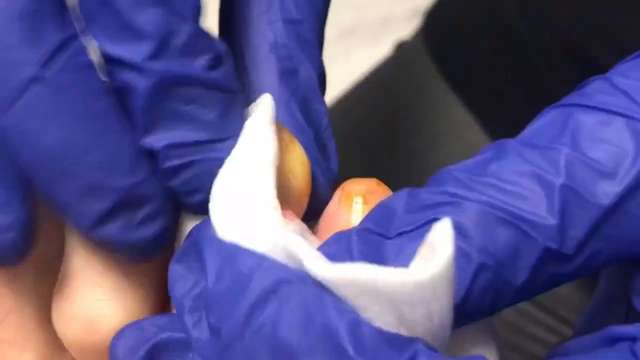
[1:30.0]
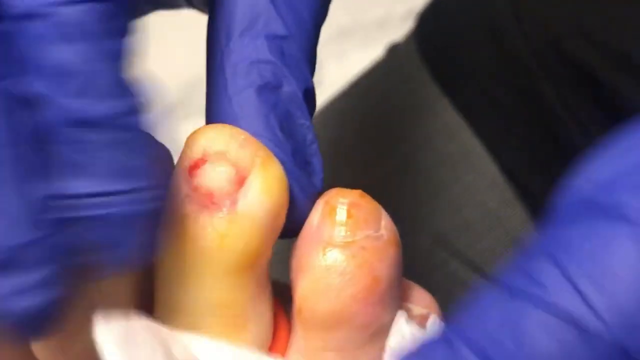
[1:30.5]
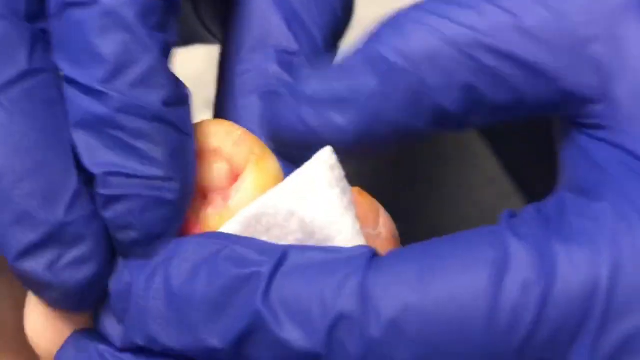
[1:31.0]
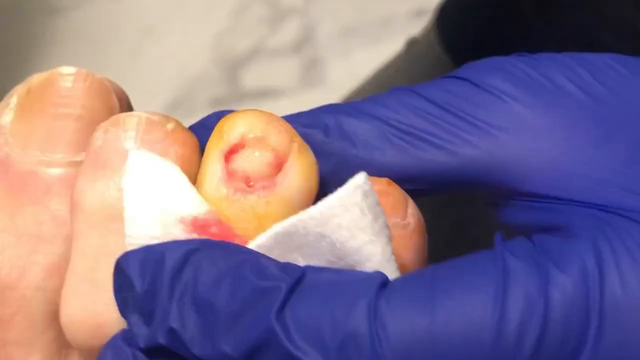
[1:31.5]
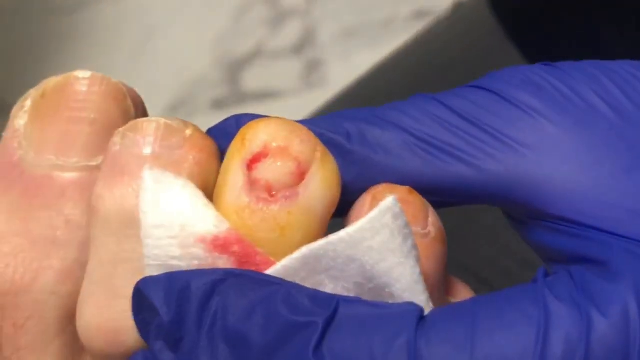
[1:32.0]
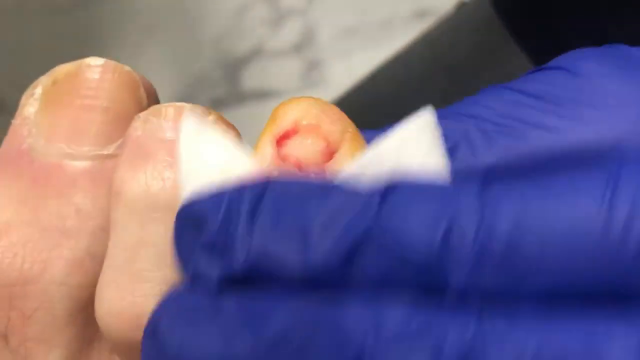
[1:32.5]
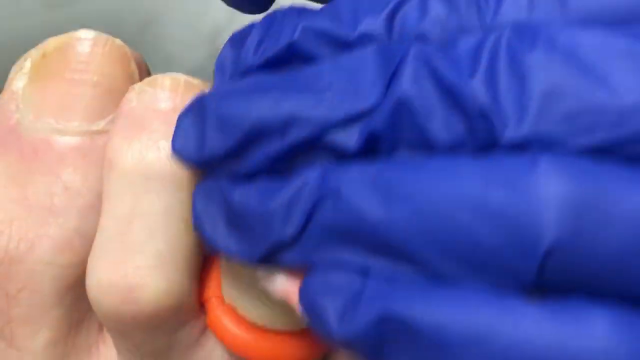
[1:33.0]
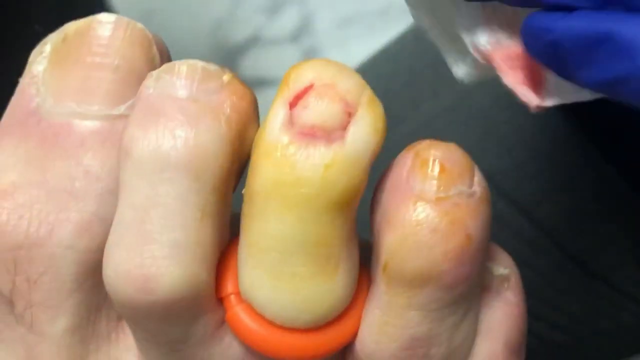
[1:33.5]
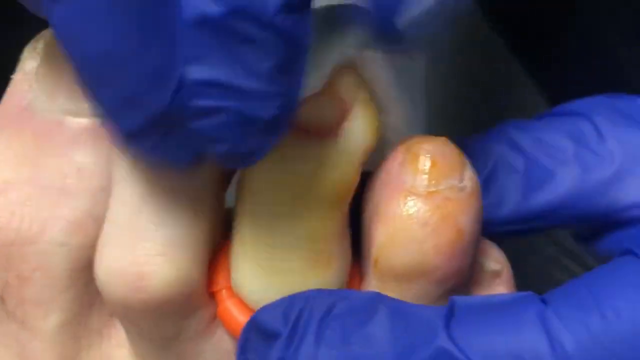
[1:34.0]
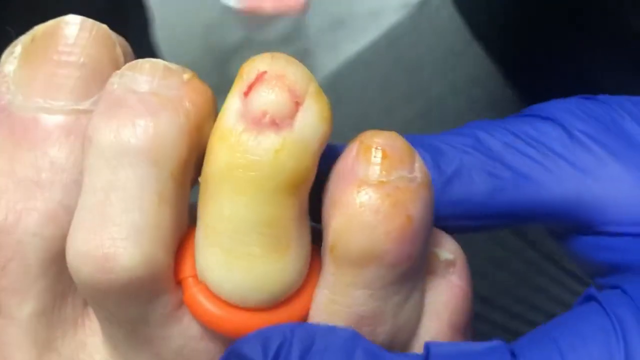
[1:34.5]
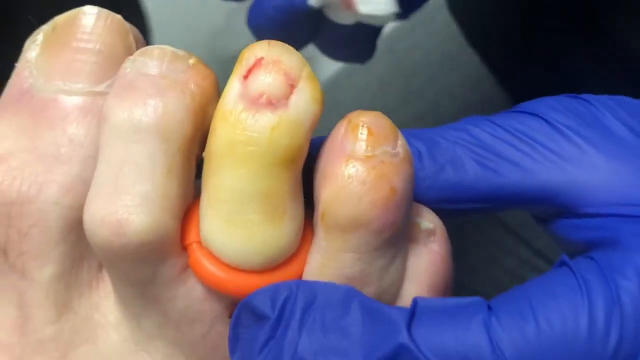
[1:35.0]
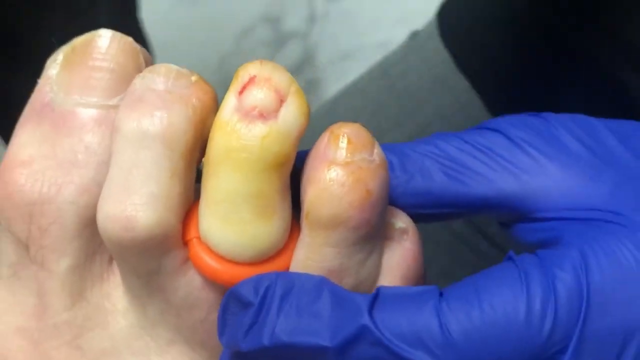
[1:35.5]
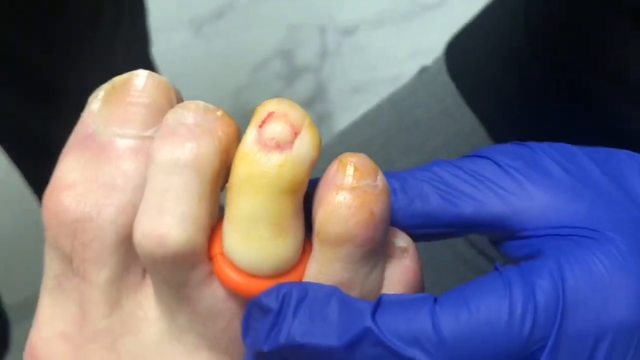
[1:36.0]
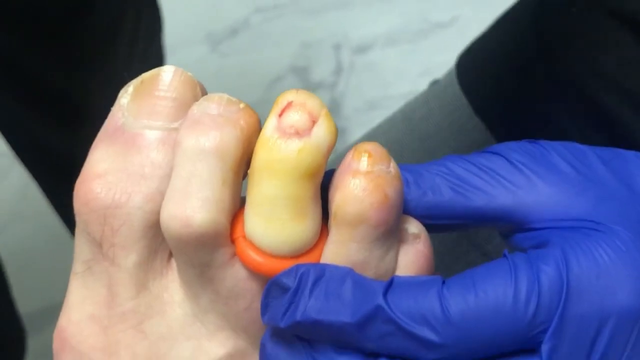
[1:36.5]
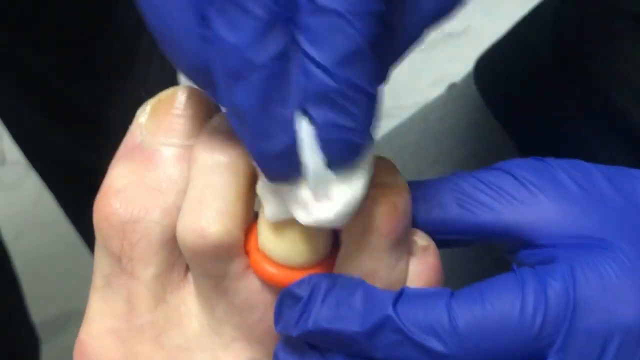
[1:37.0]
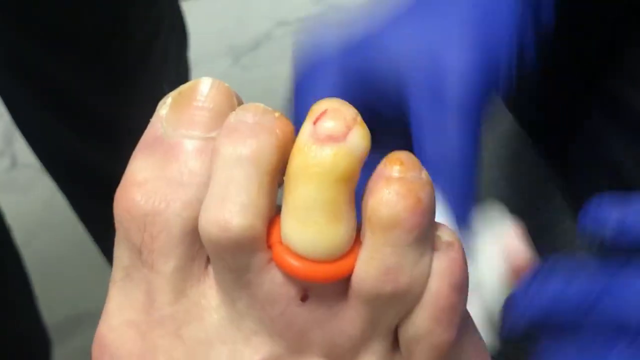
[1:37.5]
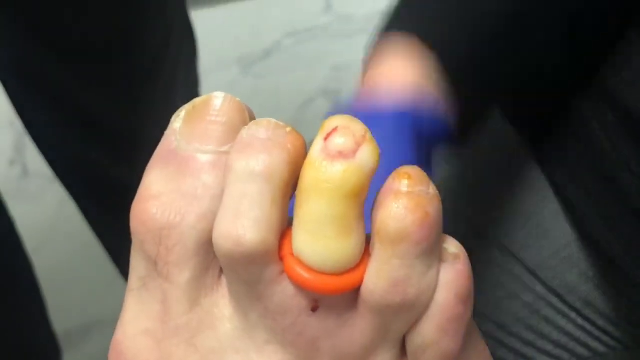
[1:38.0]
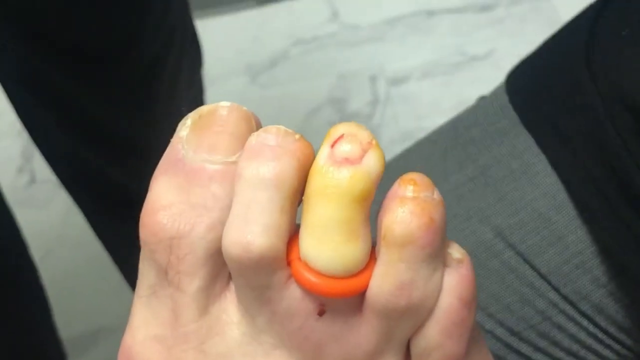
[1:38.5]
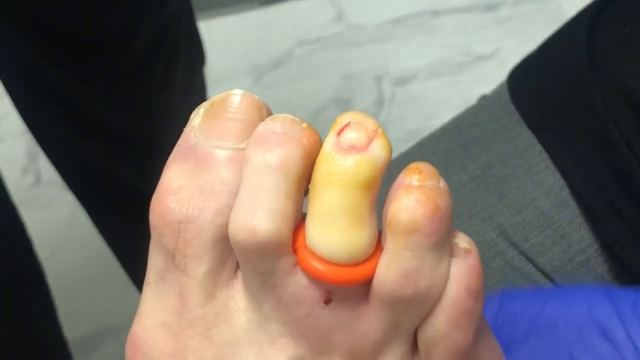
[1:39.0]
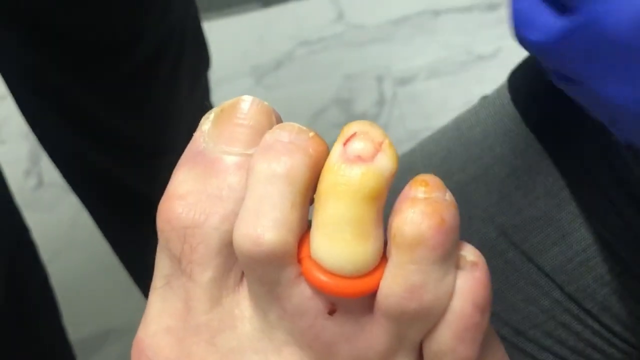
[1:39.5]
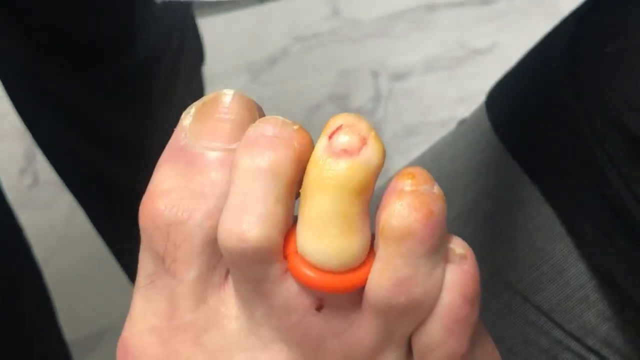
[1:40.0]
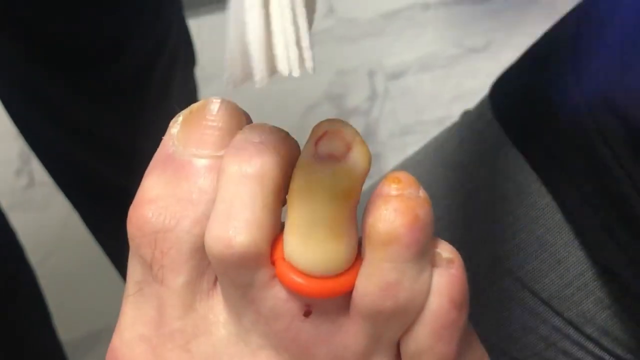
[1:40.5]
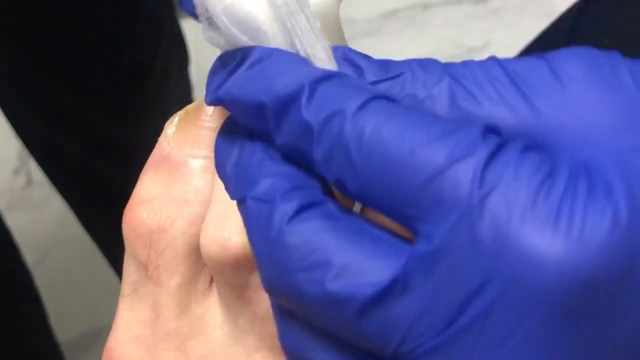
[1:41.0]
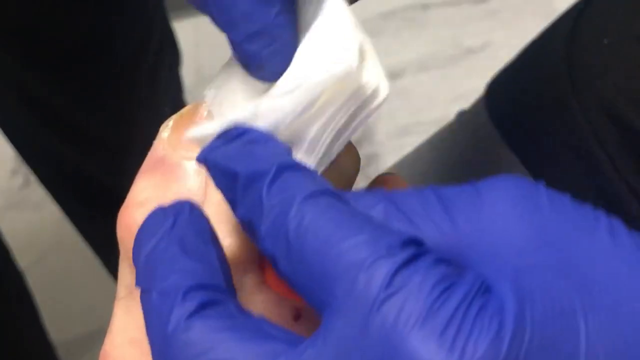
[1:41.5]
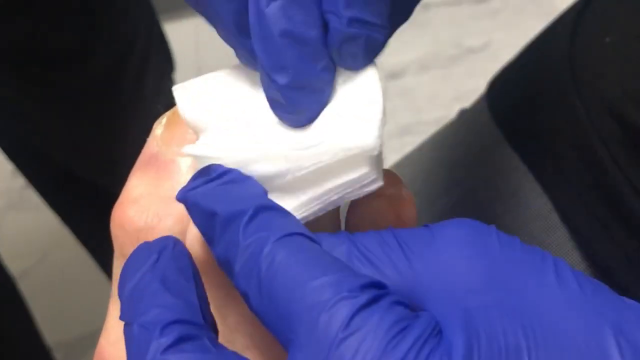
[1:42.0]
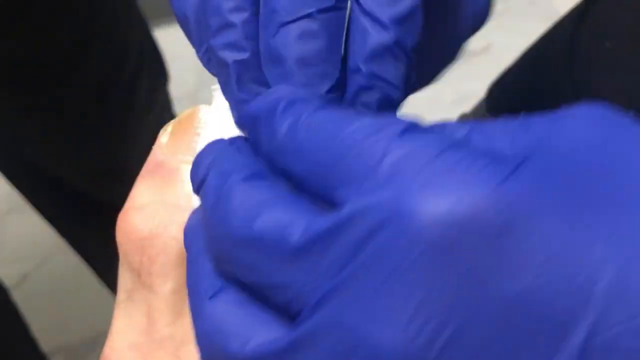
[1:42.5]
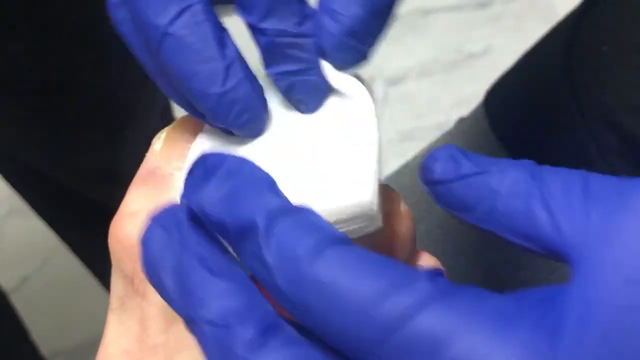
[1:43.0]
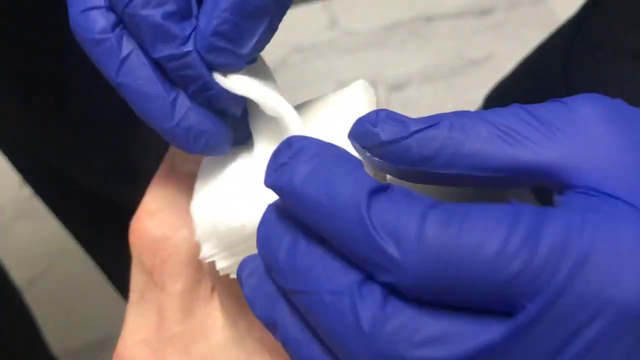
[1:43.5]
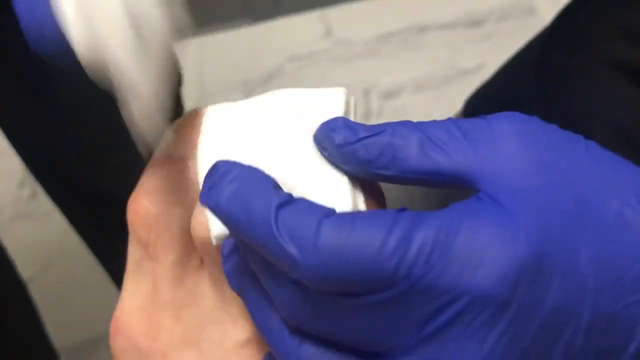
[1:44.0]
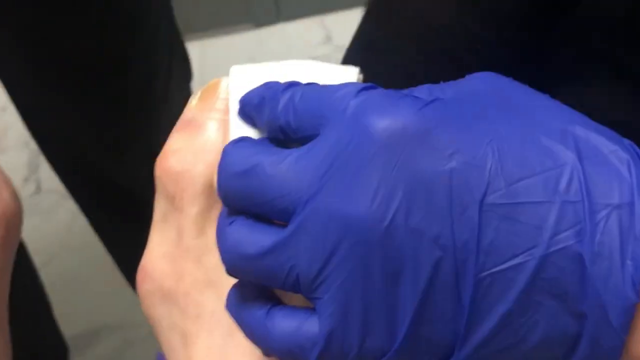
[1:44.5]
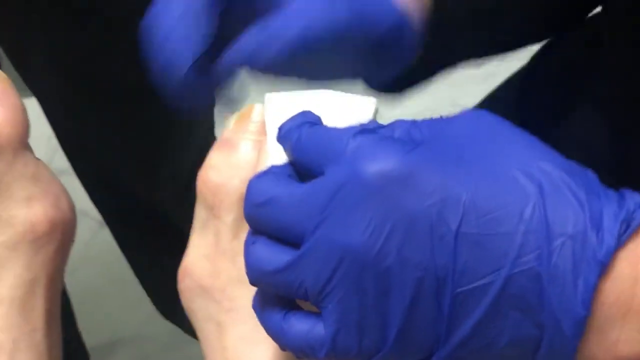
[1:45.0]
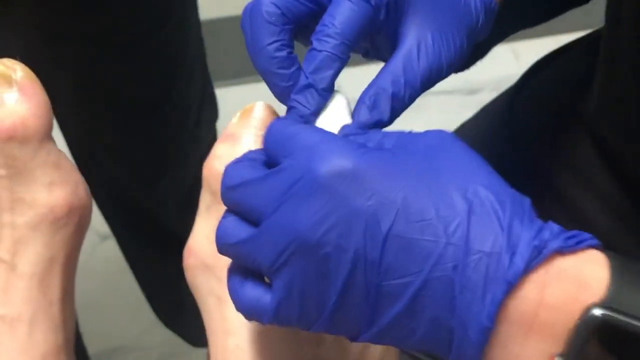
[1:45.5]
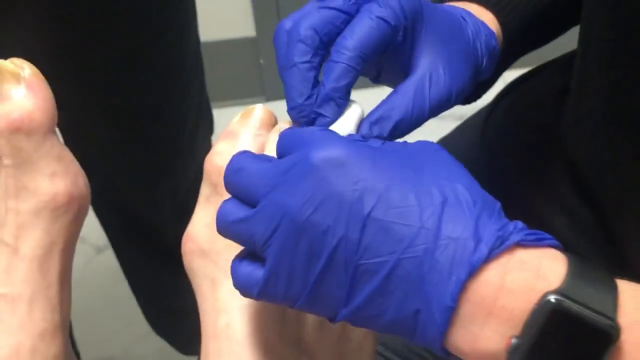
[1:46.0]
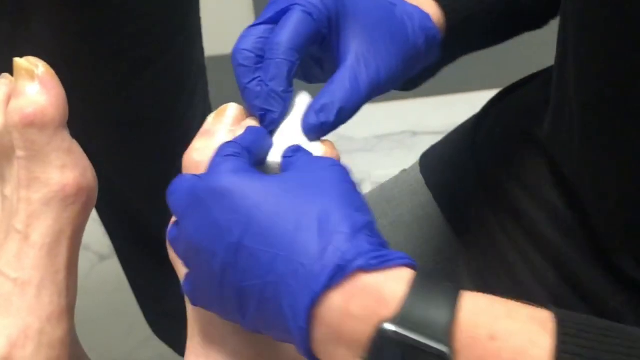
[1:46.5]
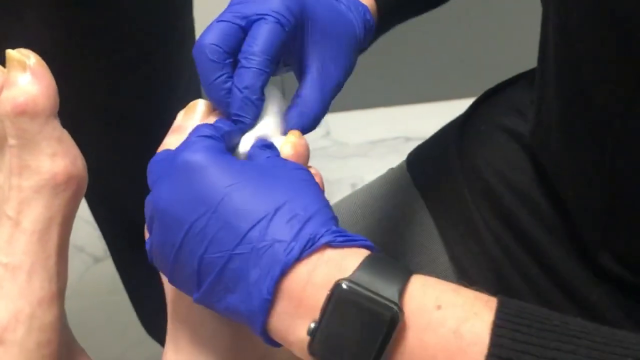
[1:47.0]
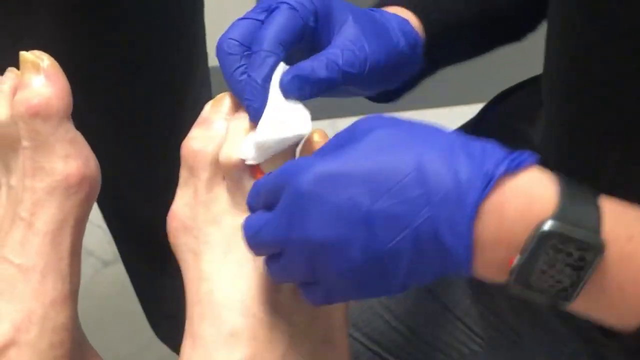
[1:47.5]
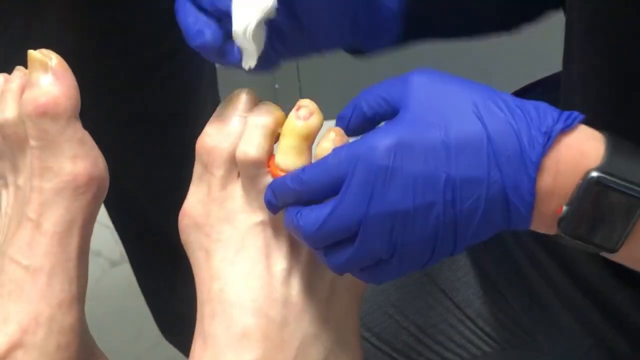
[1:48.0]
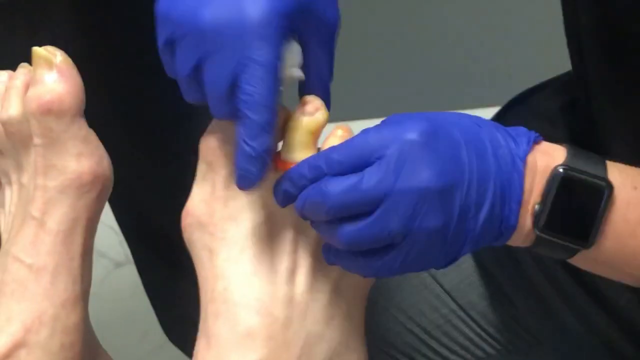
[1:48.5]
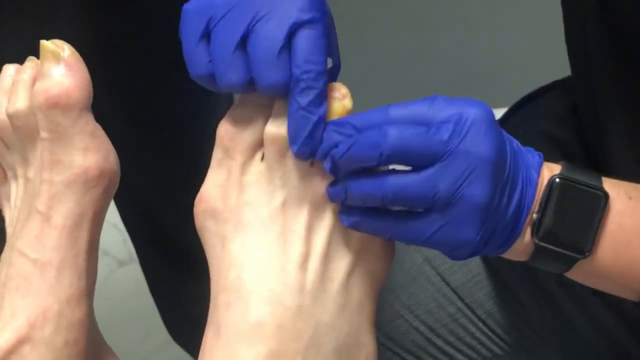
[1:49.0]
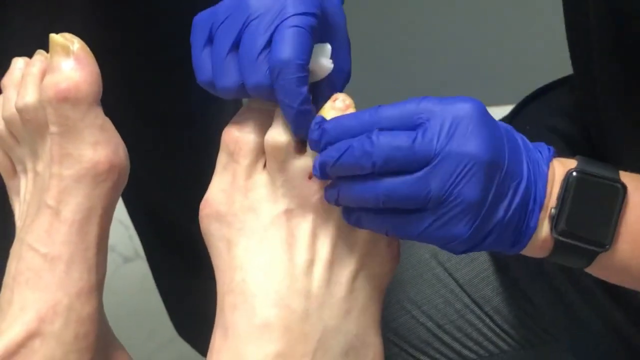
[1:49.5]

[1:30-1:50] The gauze continues to be dabbed on the toenail area, with the person using both gloved hands. Much of the liquid is removed, but red marks remain on the flesh, and the toe is still kind of an orange color, possibly from a saline or iodine solution. They keep wiping with more gauze, then take brand new gauze folded into a square that appears to have several layers and place it on the toe. She takes off a layer and wraps the gauze so it forms around the foot. She then completely removes the little orange rubber band that was around the foot.